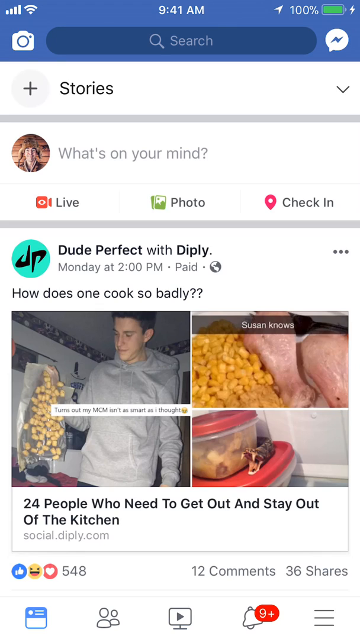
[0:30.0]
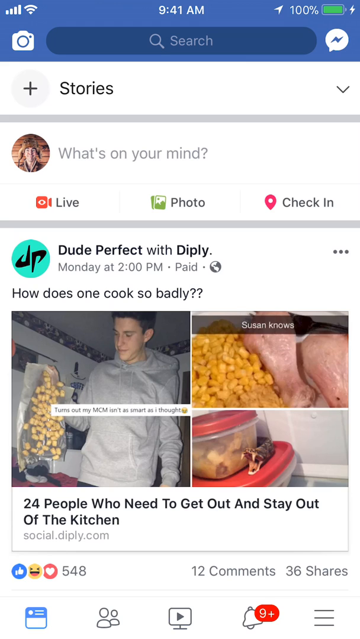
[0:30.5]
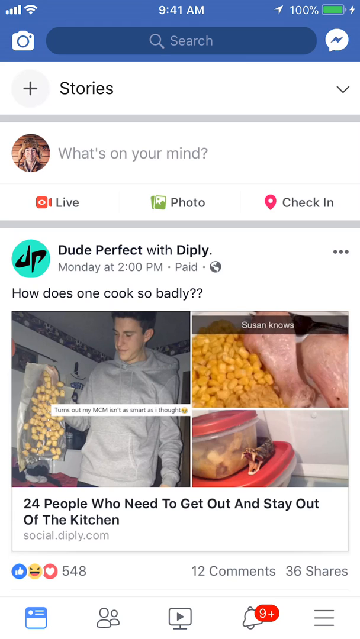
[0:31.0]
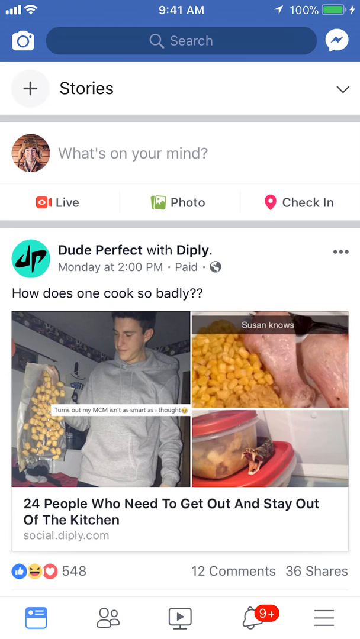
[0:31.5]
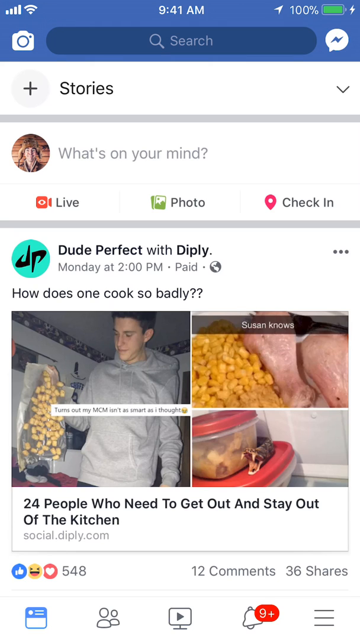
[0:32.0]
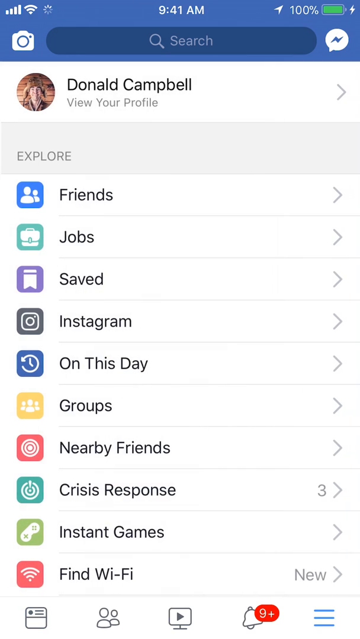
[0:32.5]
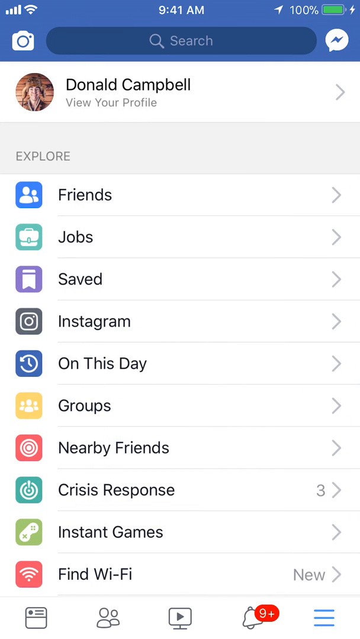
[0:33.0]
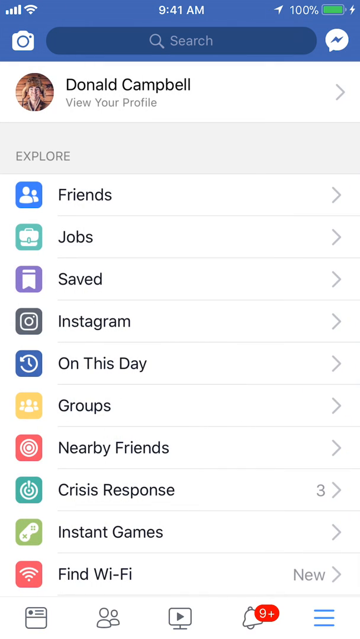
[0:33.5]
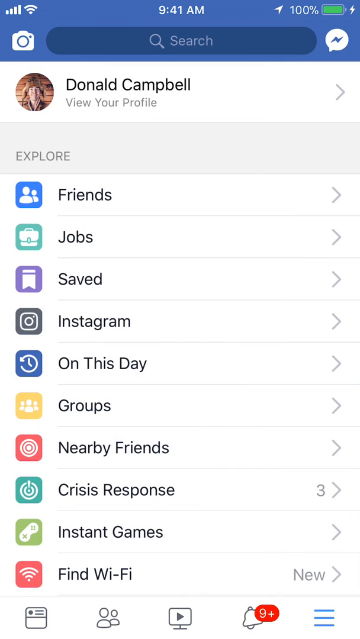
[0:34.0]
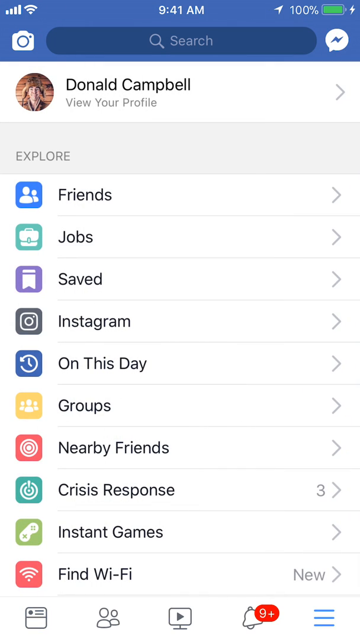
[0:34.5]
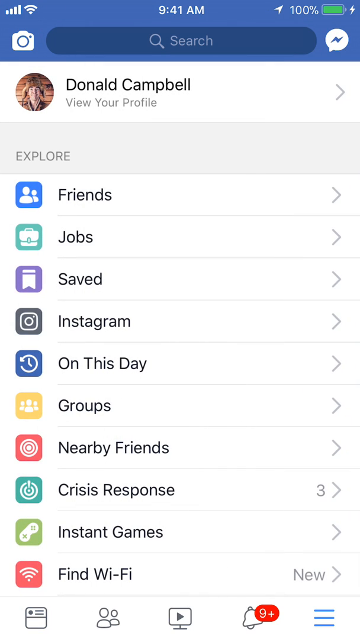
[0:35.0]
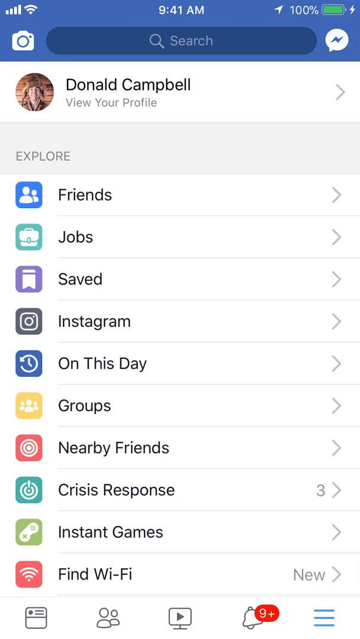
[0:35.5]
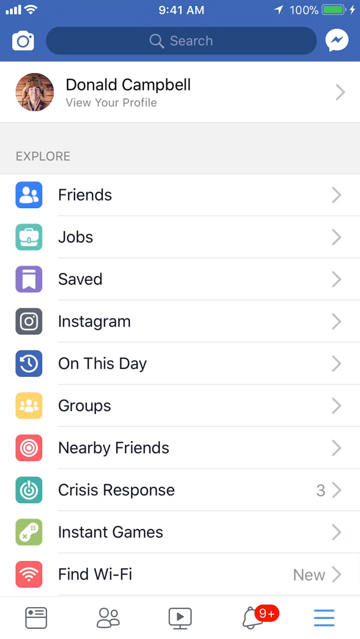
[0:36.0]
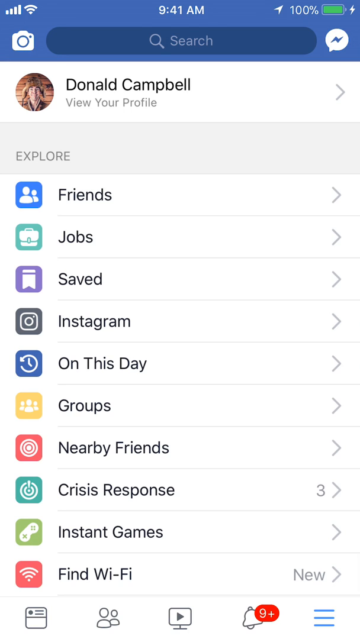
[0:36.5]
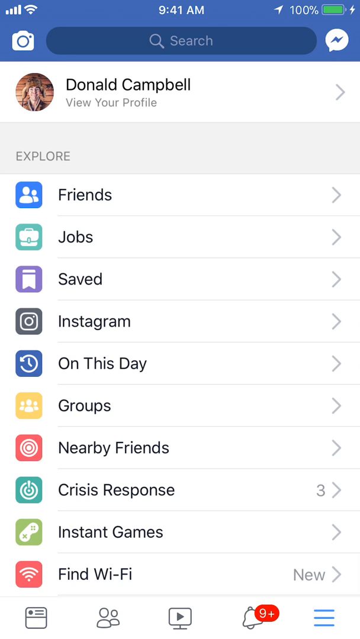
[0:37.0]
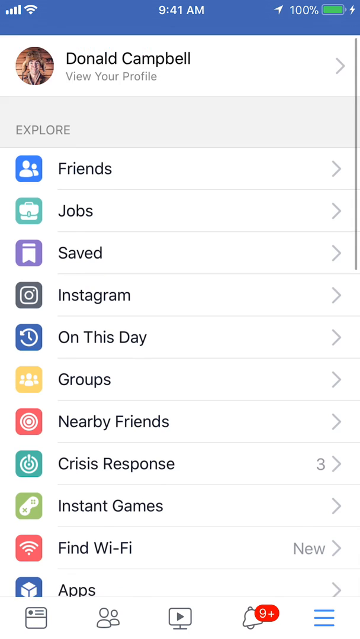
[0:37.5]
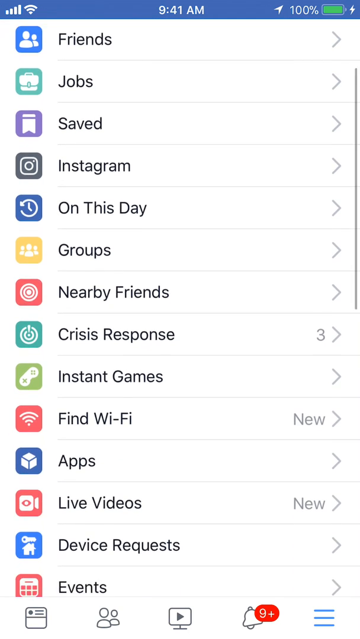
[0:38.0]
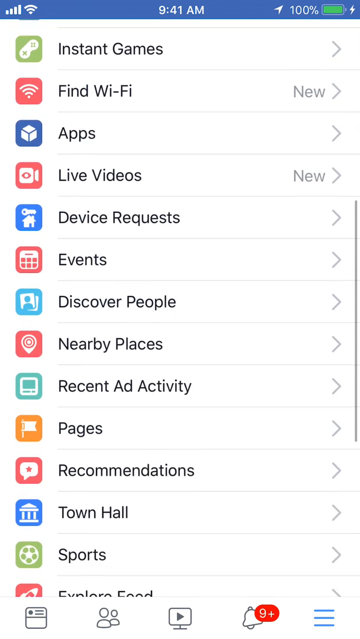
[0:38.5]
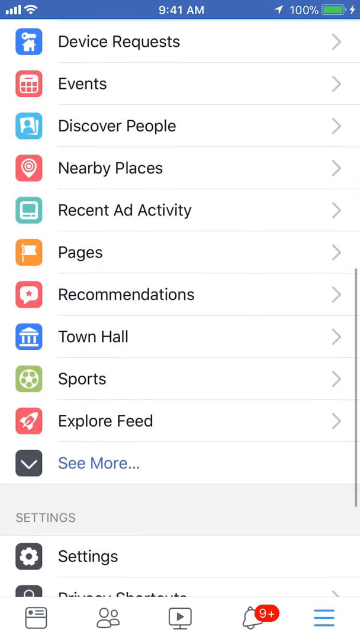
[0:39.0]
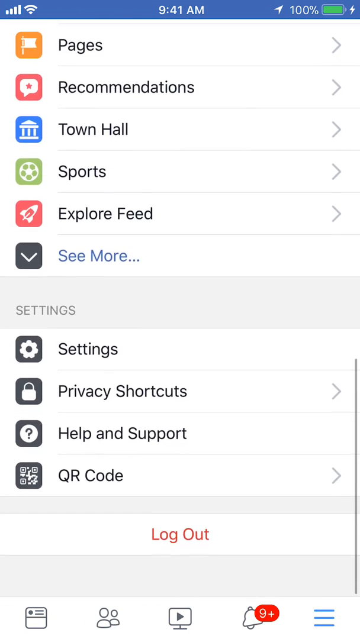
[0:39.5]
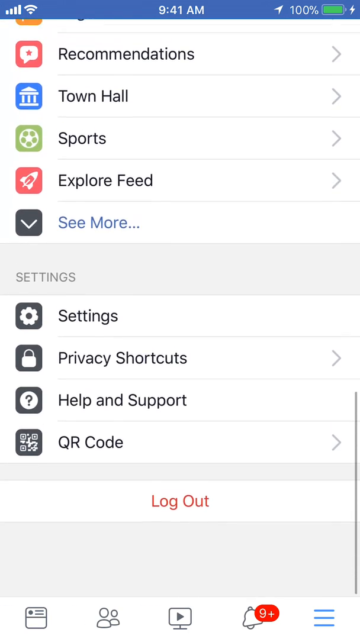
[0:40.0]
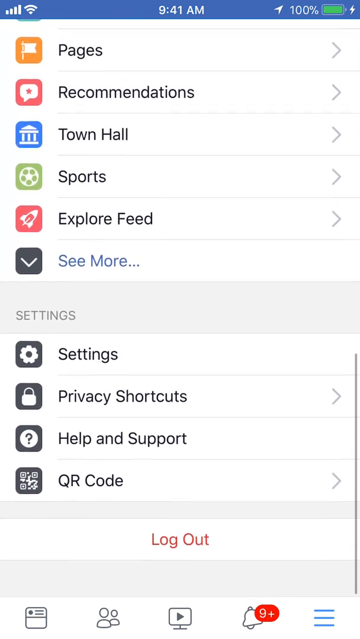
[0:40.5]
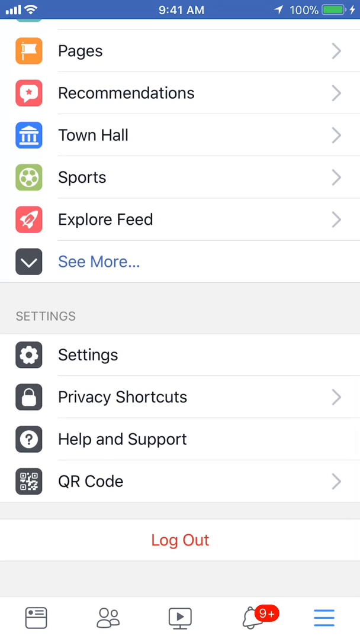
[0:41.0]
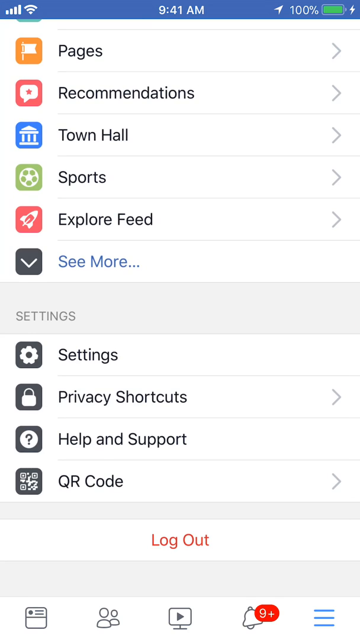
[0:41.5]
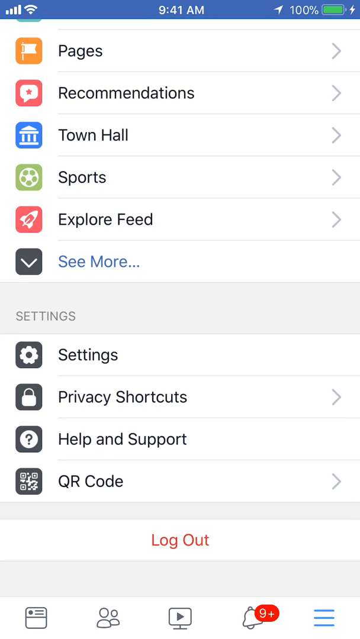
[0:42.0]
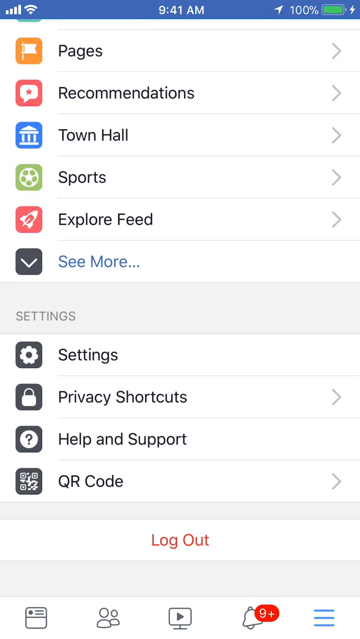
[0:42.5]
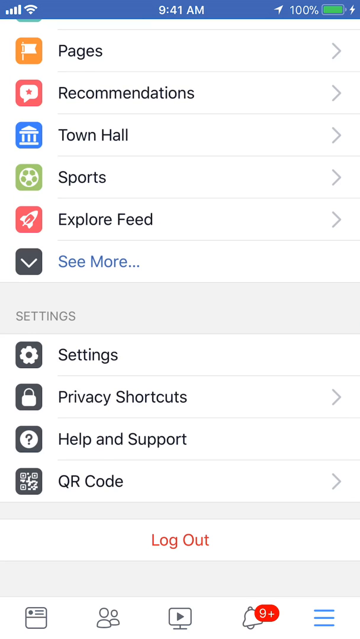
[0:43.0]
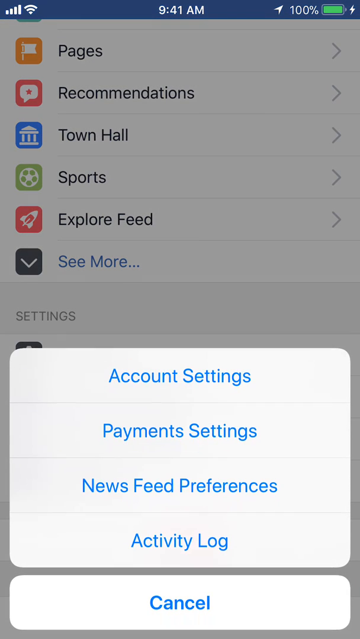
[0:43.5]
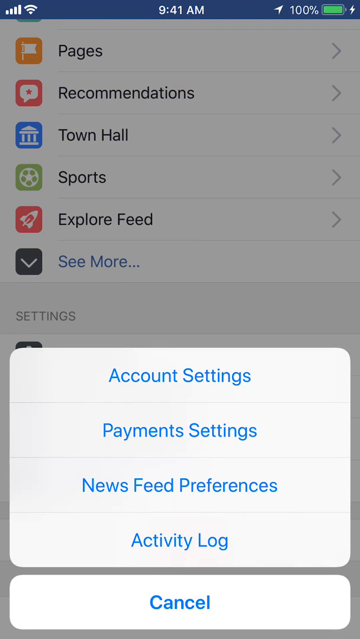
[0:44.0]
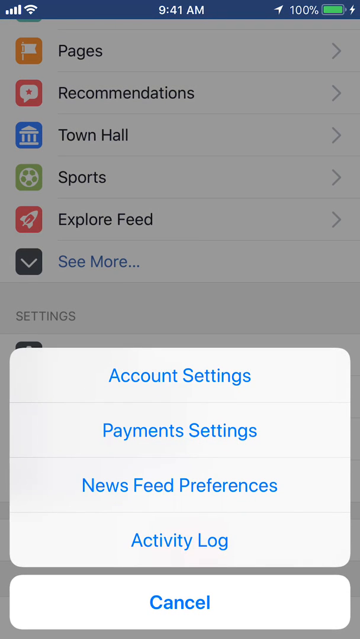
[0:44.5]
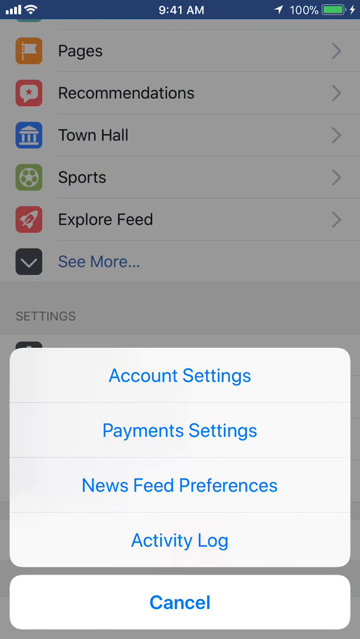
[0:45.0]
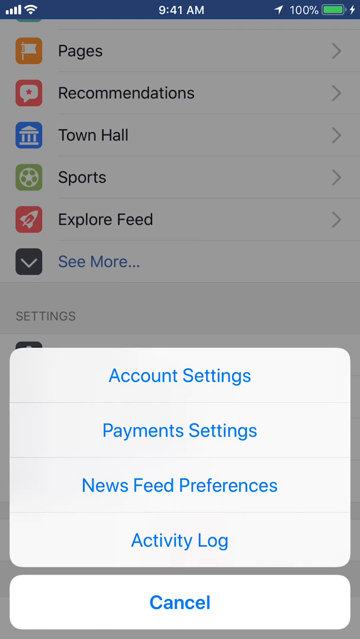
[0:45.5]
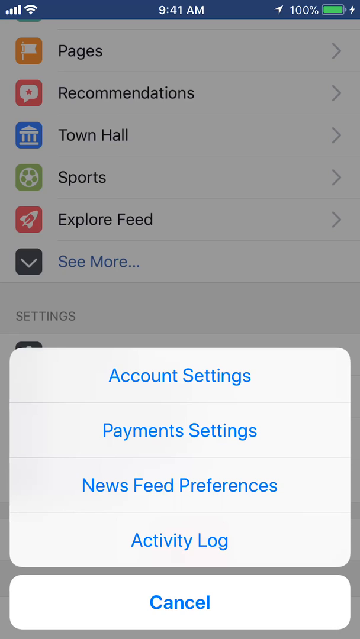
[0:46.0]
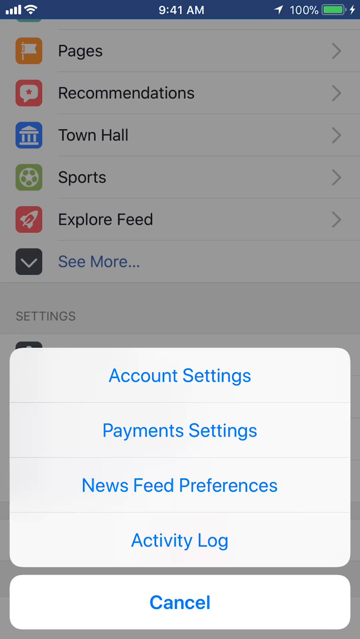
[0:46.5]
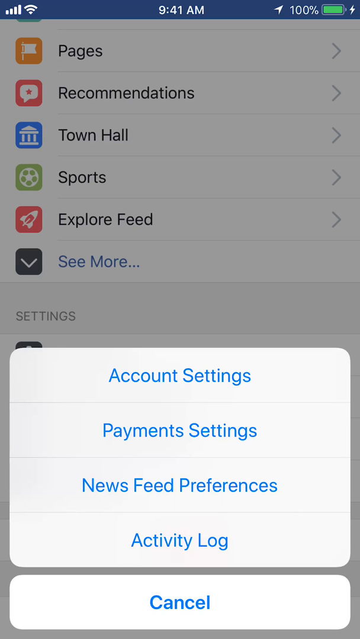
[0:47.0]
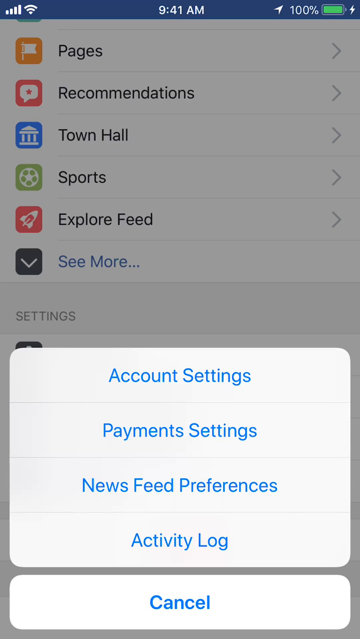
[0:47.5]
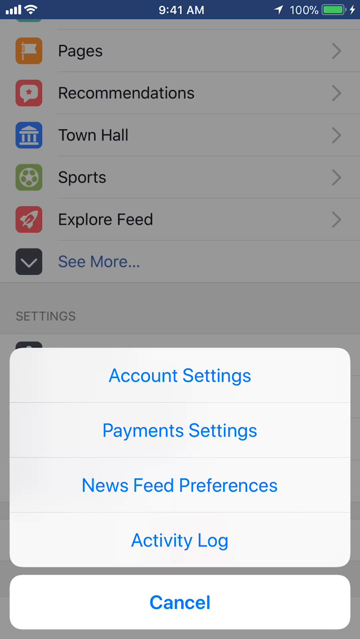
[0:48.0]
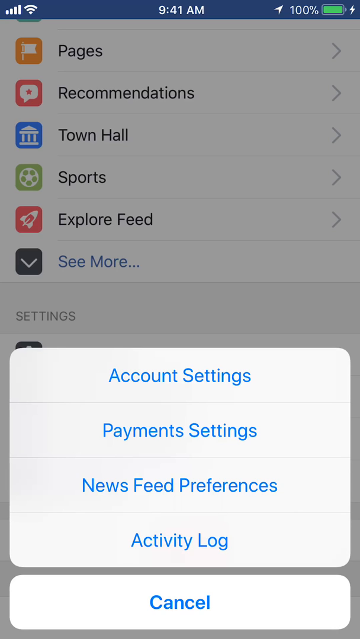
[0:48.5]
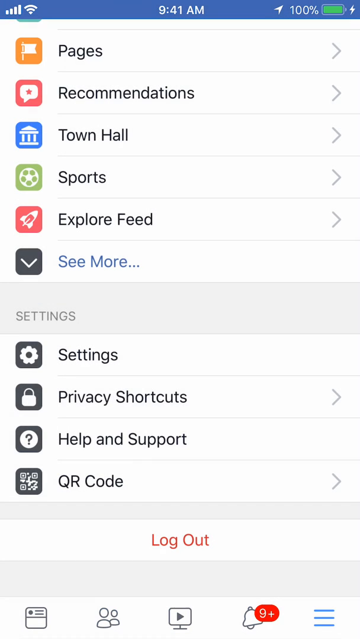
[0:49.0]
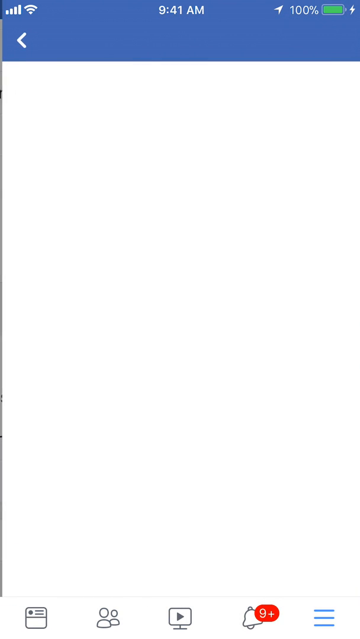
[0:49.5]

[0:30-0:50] The Dude Perfect with Dipley post about the 24 people who need to get out and stay out of the kitchen is shown. Then "Donald Campbell" and "view your profile" appear, and the person seems to scroll down on the phone through a menu listing settings, account settings, payment settings, newsfeed preference, activity log and cancel. Other entries include friends, jobs, saved, Instagram, instant games, crisis response, nearby friends, groups and on this day, suggesting the app may be Facebook. The video is in portrait mode.